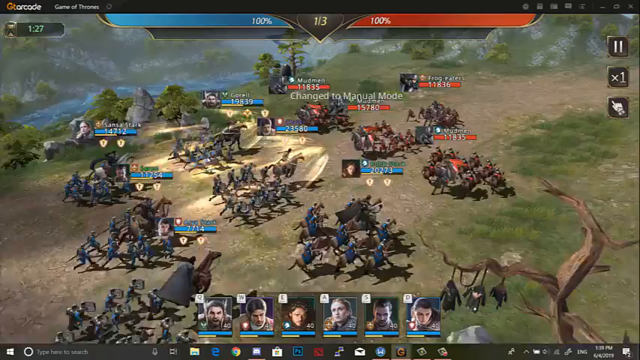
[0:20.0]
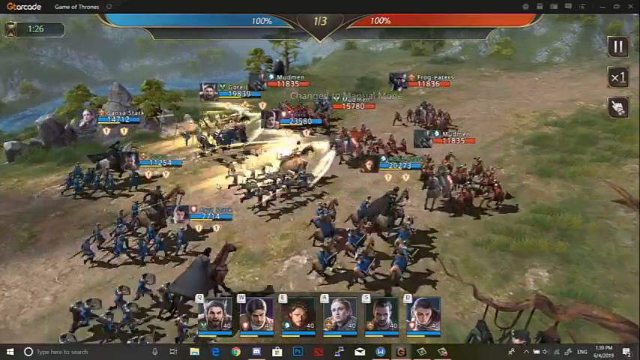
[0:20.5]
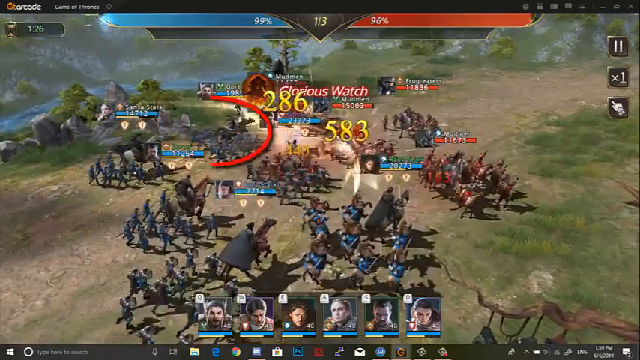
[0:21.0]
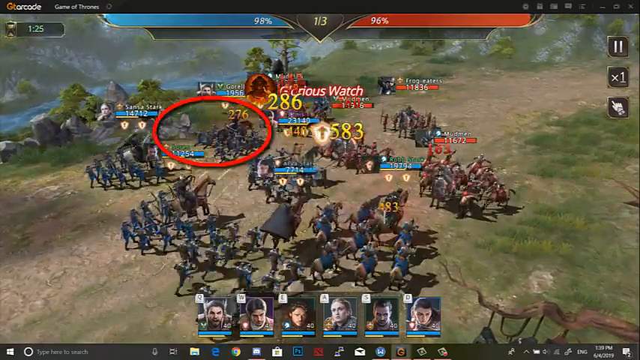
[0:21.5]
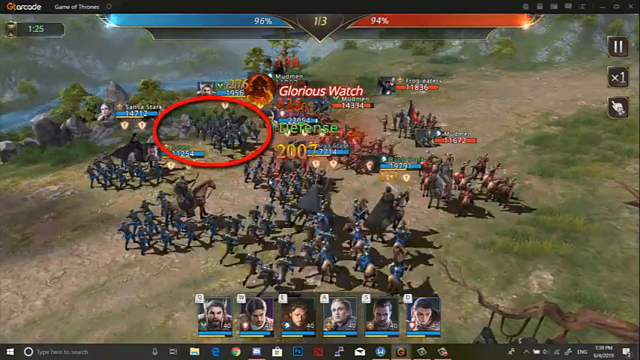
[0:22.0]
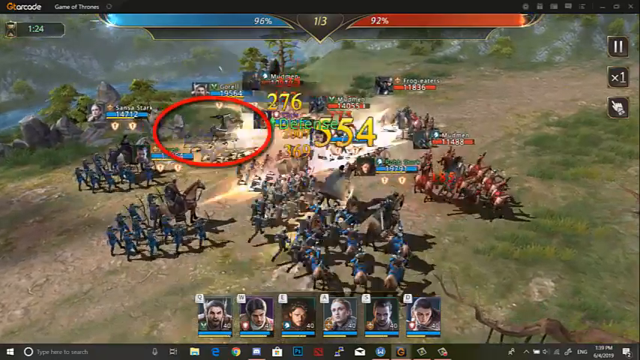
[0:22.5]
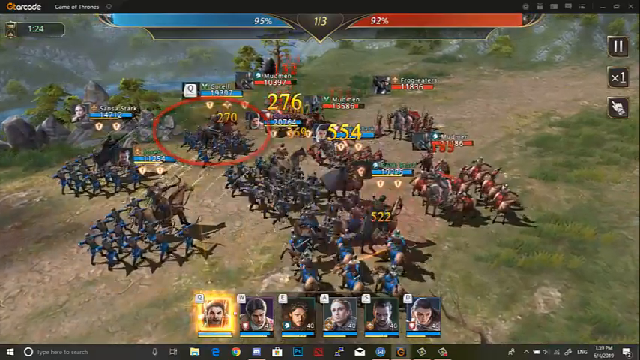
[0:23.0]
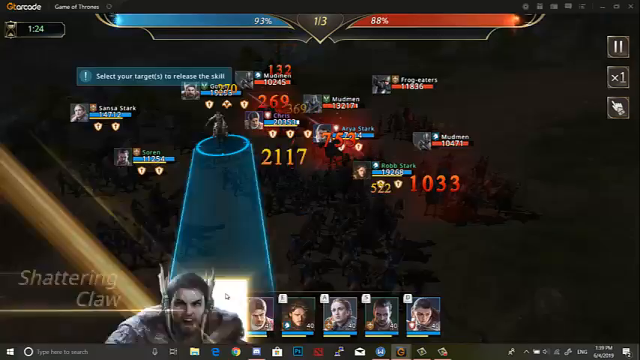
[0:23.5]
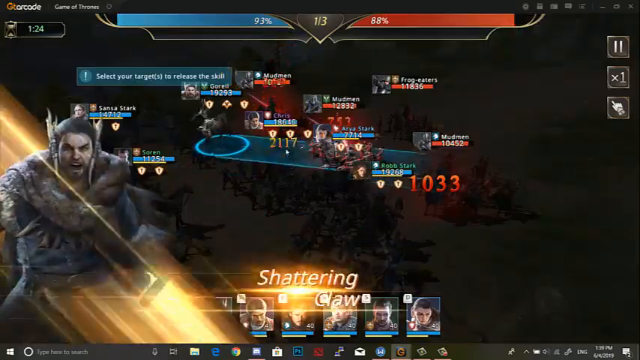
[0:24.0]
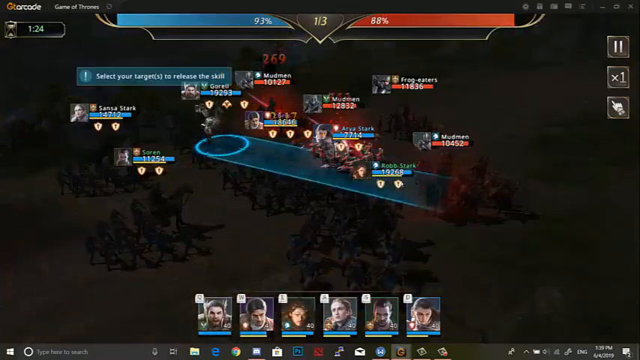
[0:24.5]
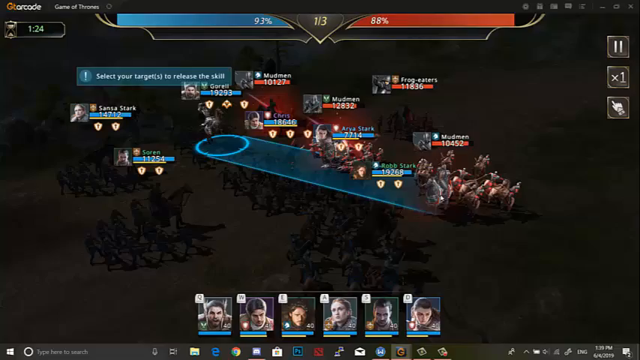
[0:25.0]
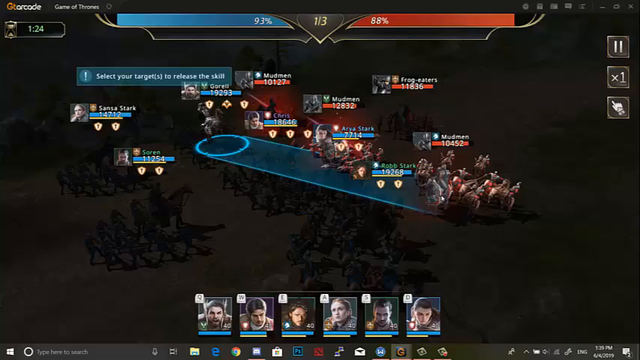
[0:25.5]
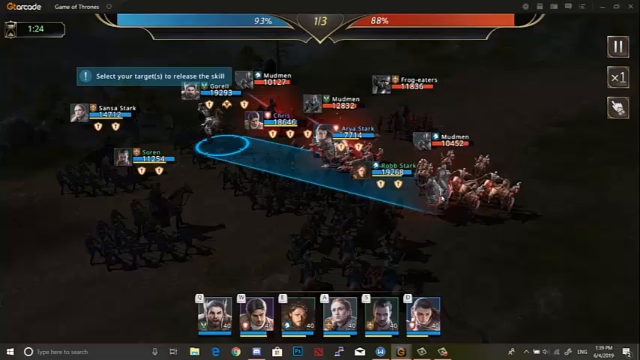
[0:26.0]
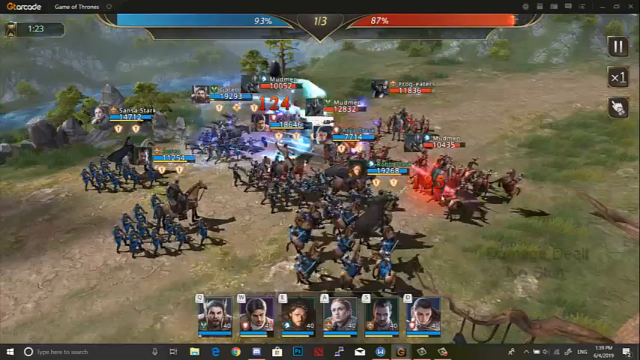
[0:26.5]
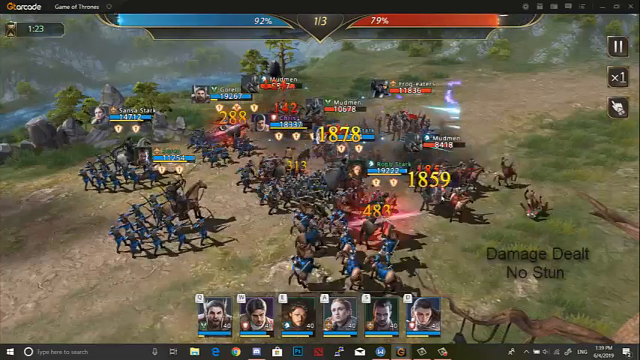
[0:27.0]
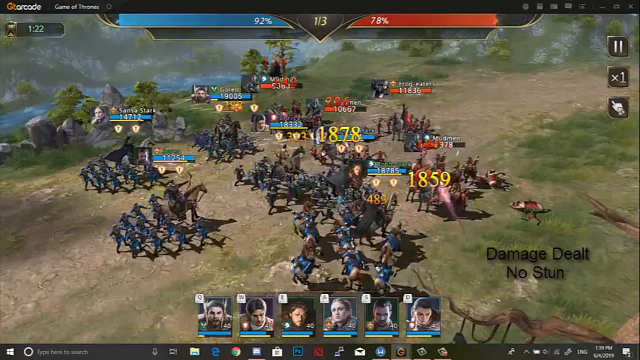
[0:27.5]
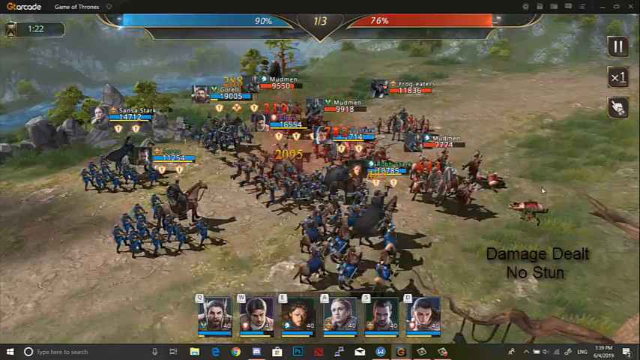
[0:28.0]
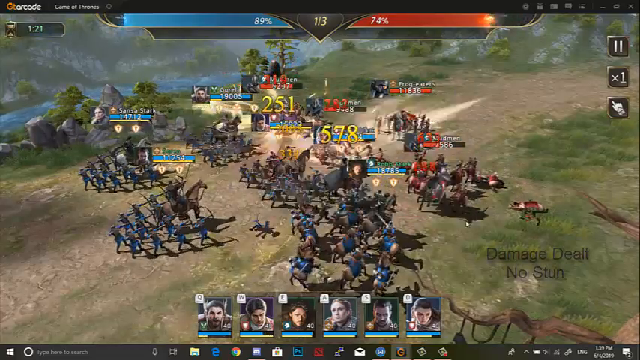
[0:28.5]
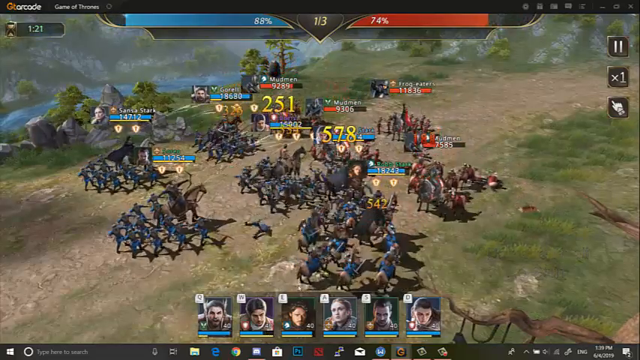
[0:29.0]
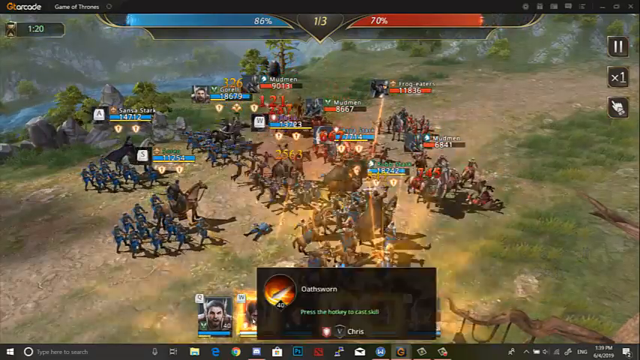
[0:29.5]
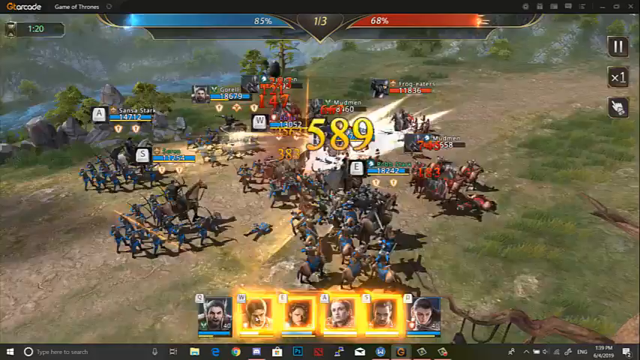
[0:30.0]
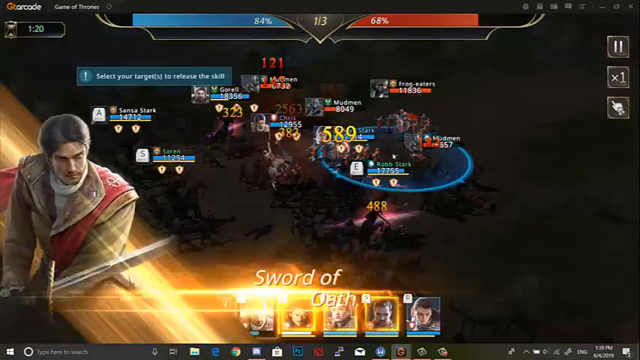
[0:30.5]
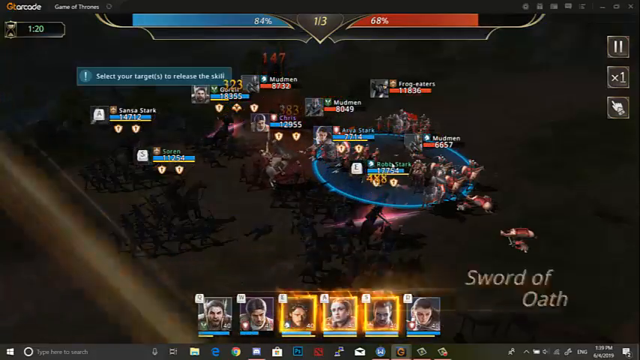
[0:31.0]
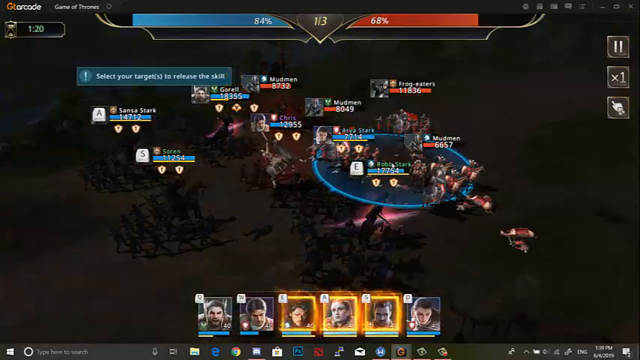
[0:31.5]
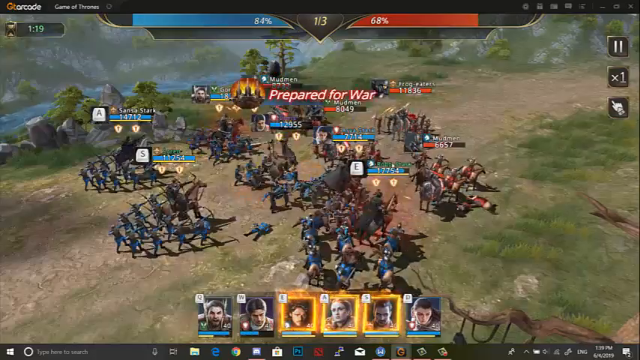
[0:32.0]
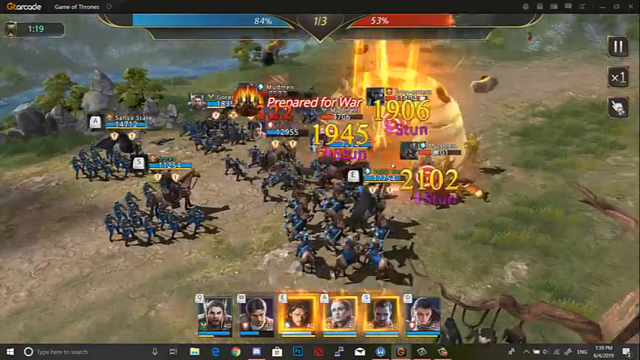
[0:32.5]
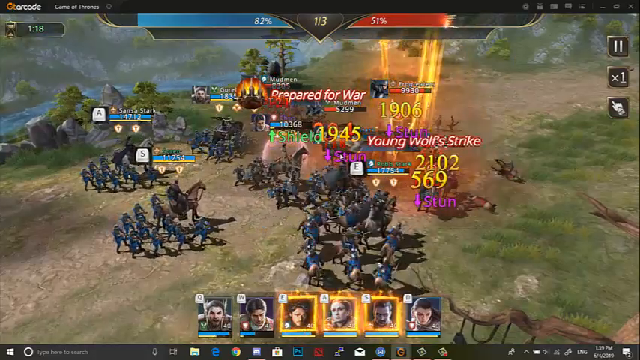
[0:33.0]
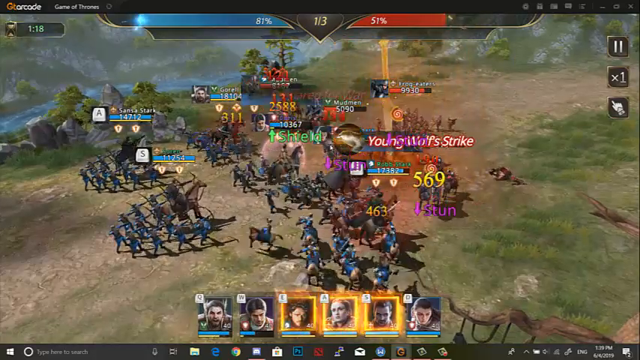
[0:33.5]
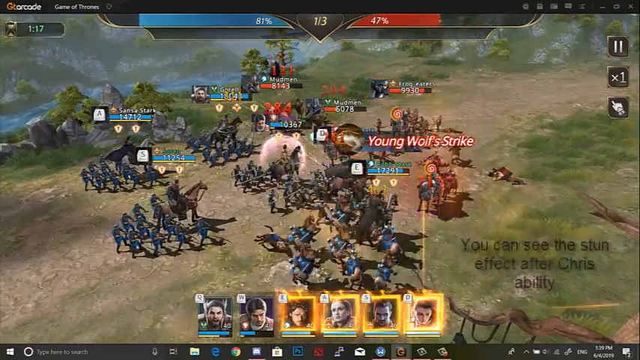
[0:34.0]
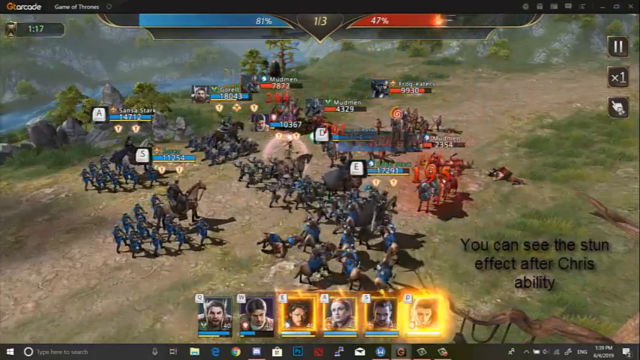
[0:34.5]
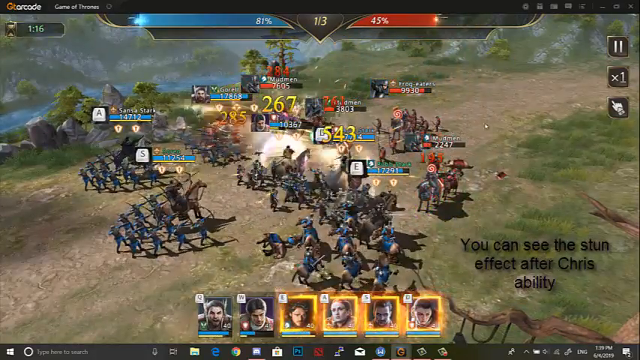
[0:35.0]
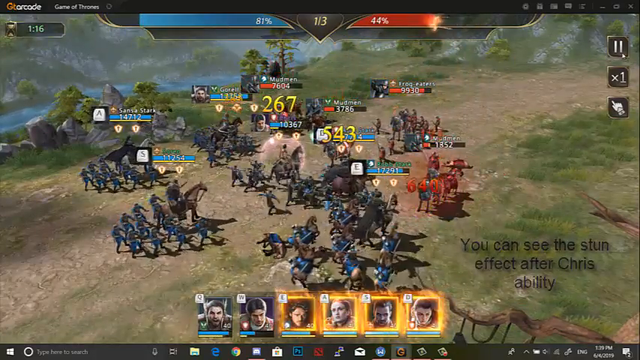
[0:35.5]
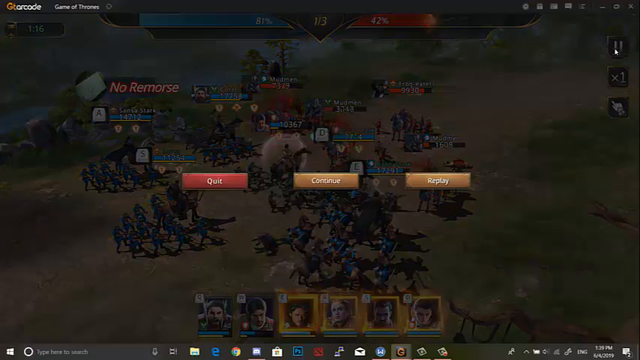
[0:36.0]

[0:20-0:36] Gameplay continues, with the two sides going after each other. Multiple hit points flash across the screen, special abilities are showcased, and the actions are detailed as they happen along with special effects. The special abilities have to warm up before they can be used. The video stops in the middle of gameplay, and it looks like both teams still have 100%, so no one has made any real progress. The Game of Thrones game has countryside, mountains, and a river setting.